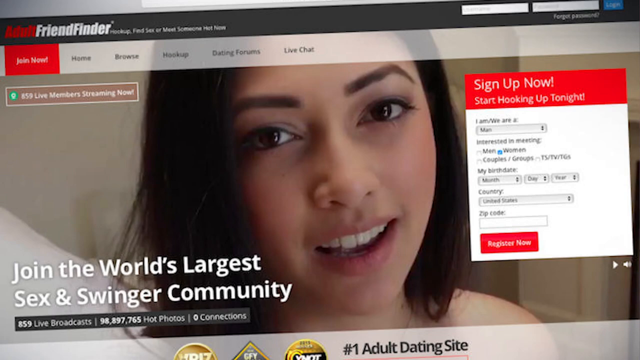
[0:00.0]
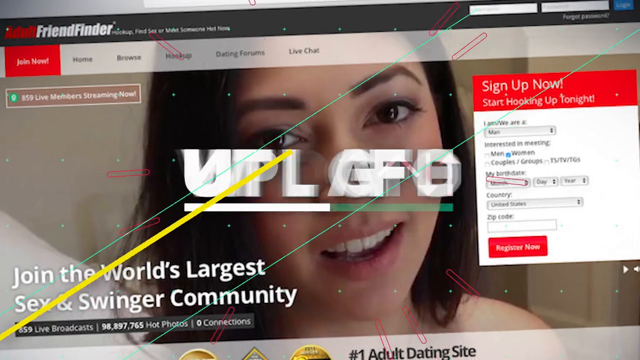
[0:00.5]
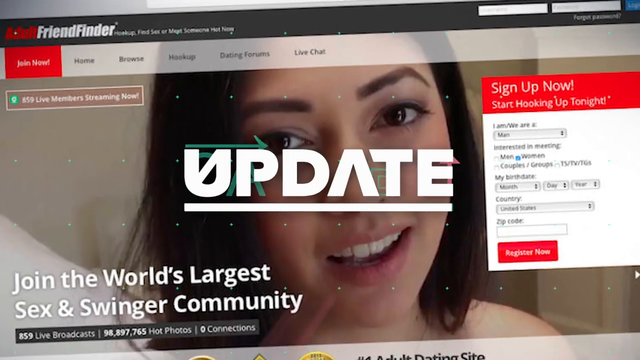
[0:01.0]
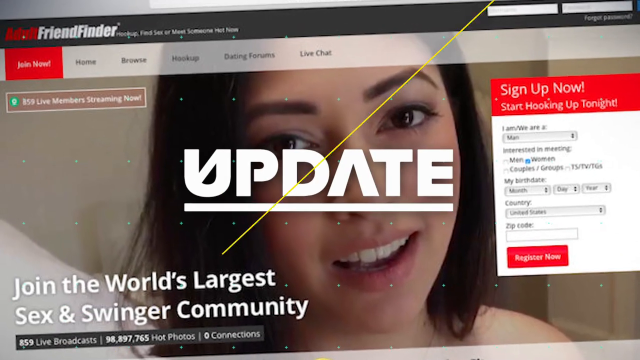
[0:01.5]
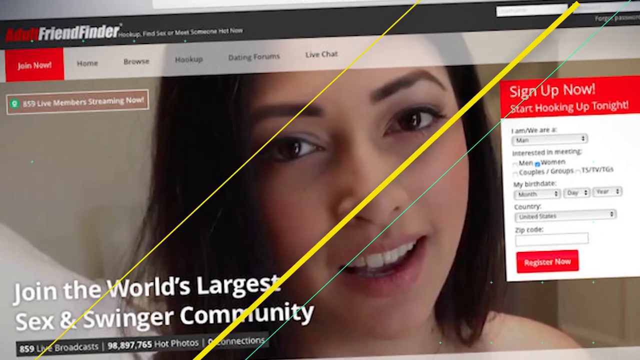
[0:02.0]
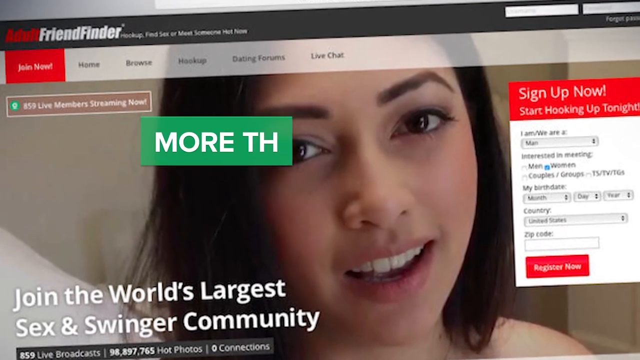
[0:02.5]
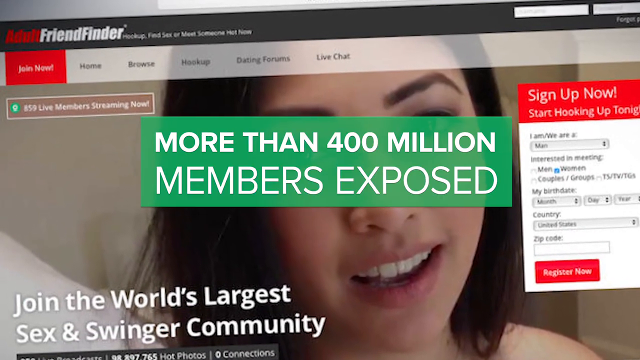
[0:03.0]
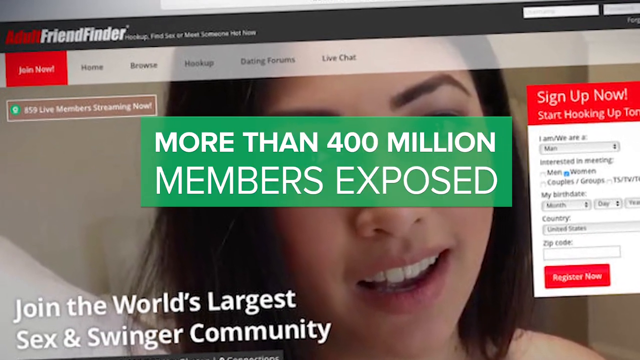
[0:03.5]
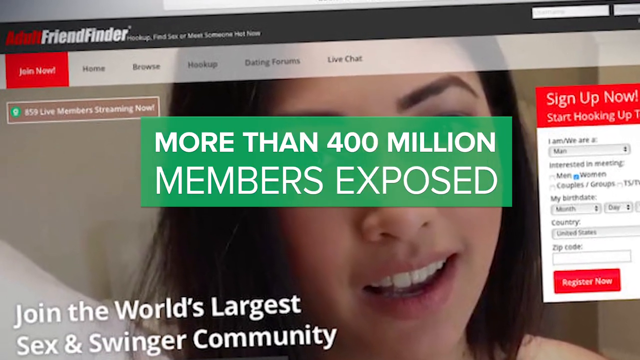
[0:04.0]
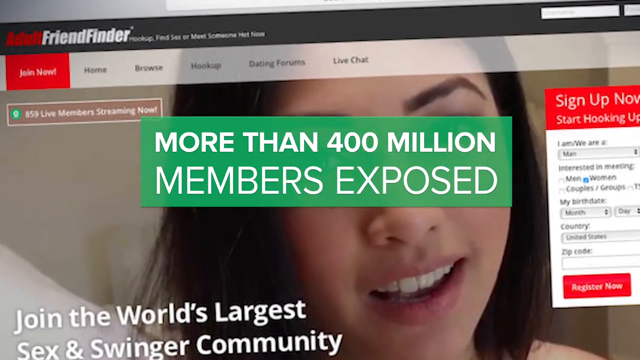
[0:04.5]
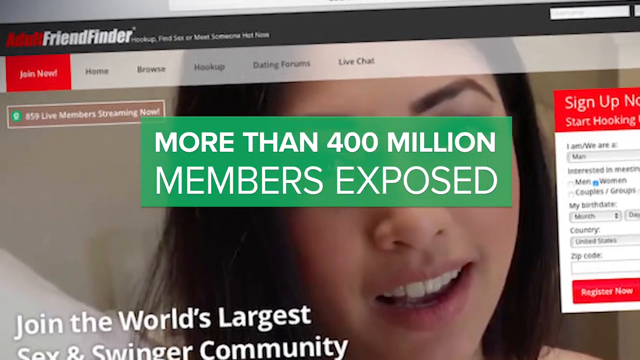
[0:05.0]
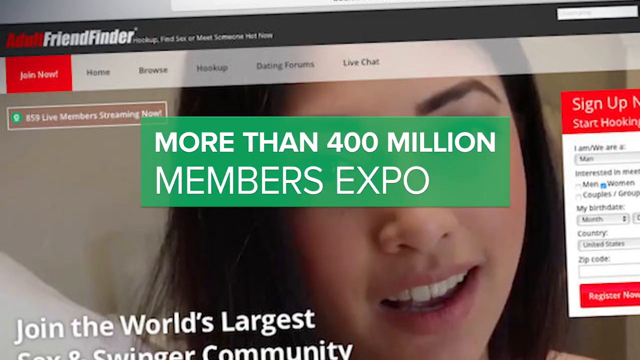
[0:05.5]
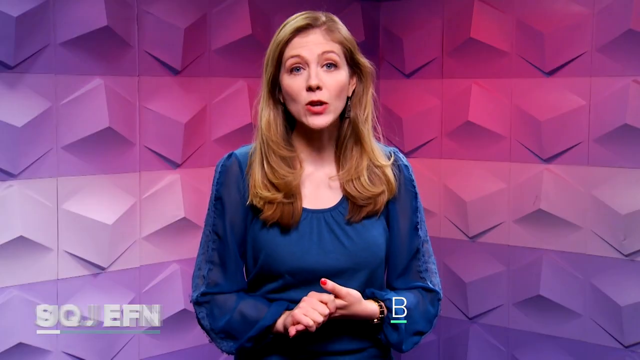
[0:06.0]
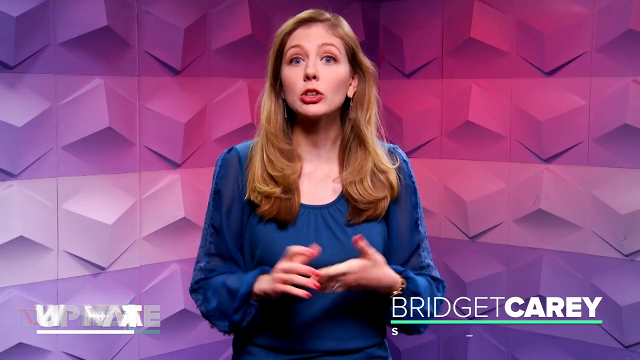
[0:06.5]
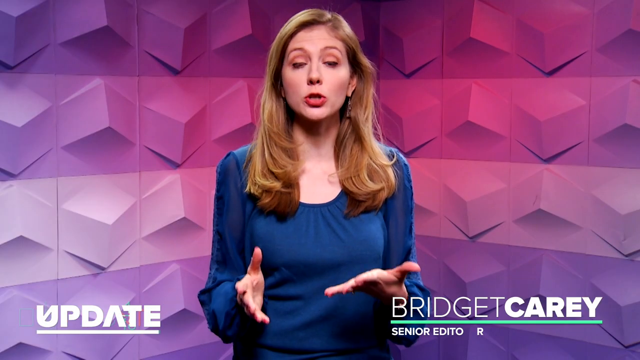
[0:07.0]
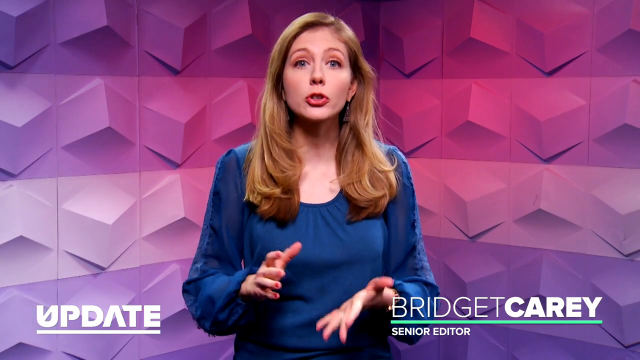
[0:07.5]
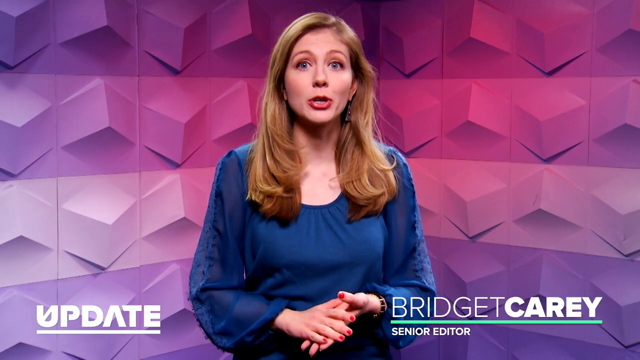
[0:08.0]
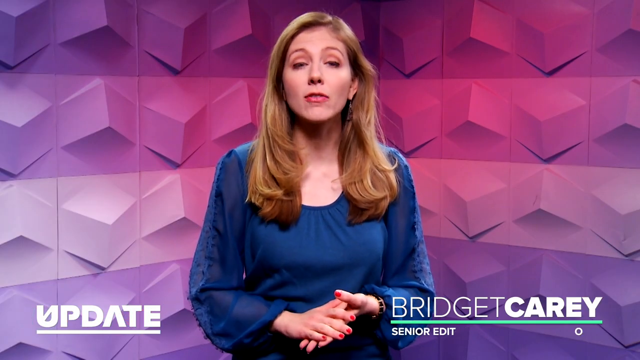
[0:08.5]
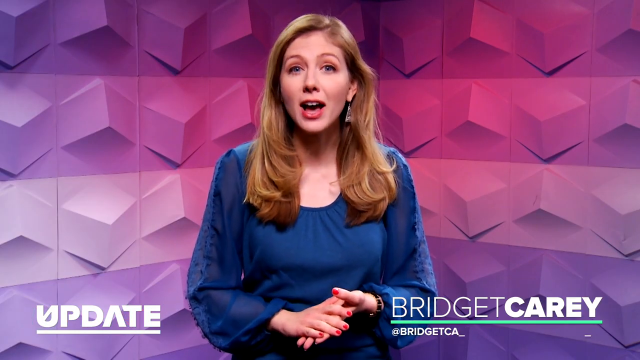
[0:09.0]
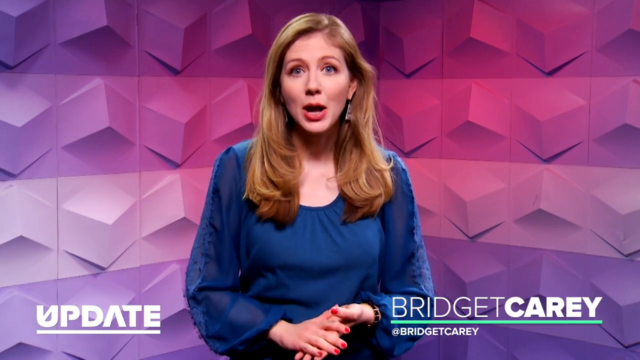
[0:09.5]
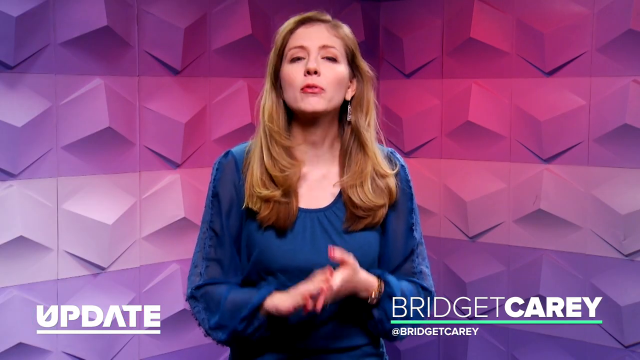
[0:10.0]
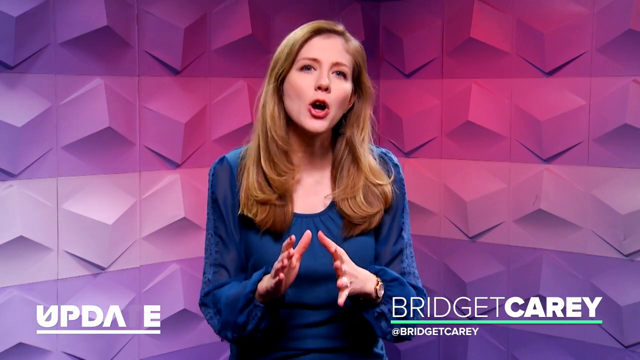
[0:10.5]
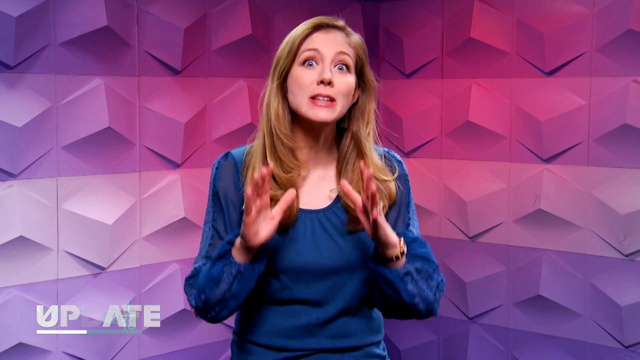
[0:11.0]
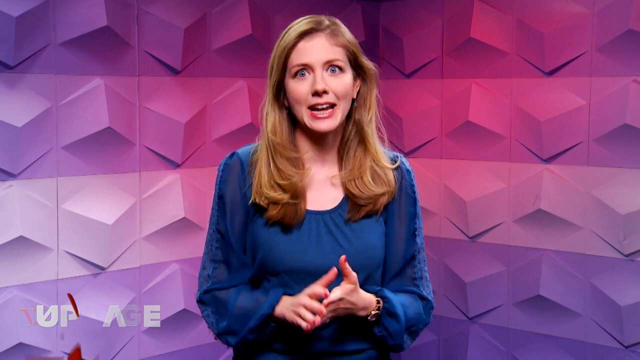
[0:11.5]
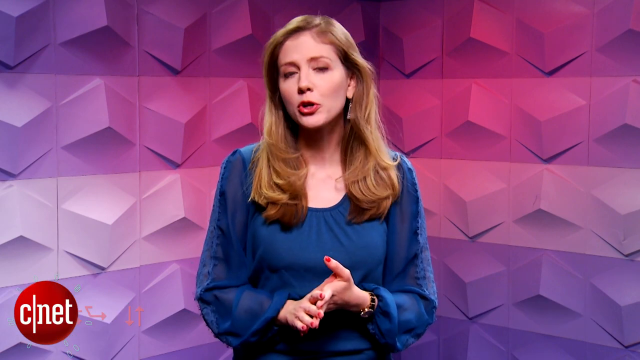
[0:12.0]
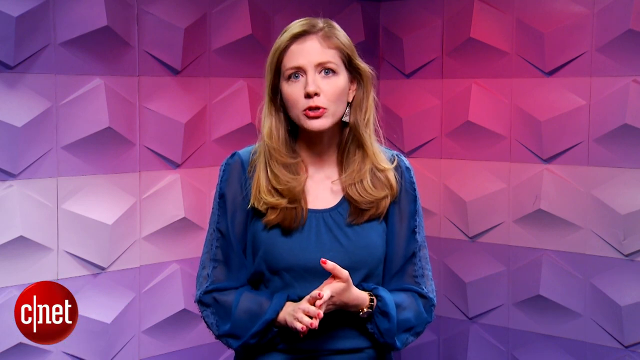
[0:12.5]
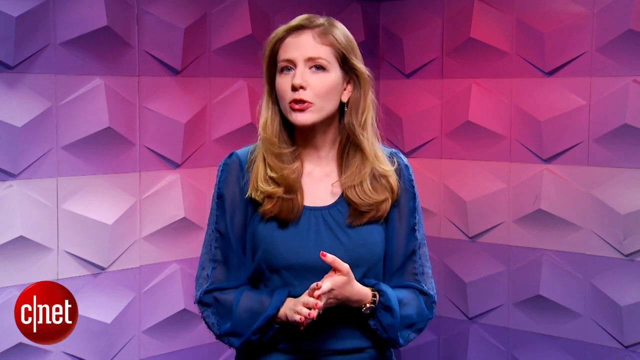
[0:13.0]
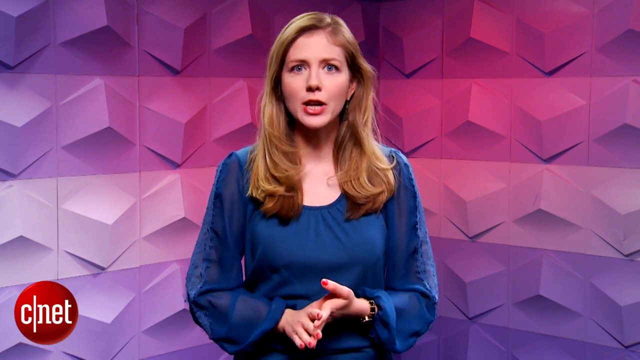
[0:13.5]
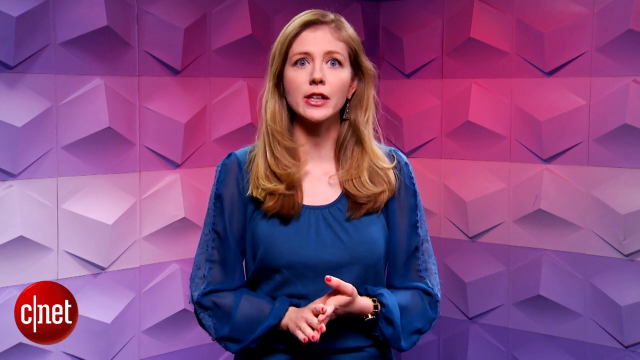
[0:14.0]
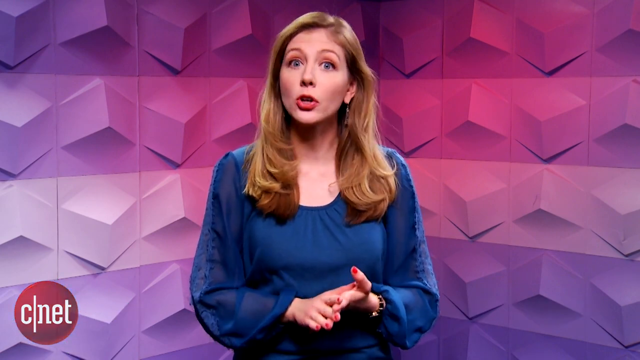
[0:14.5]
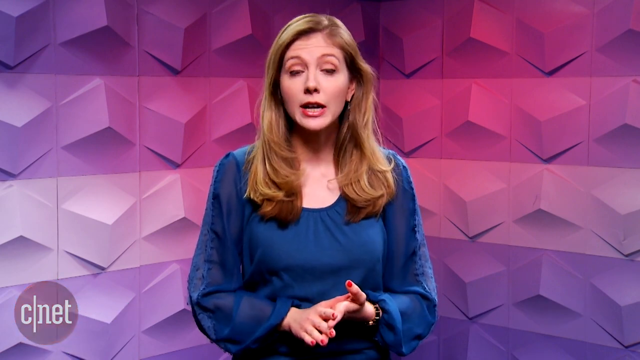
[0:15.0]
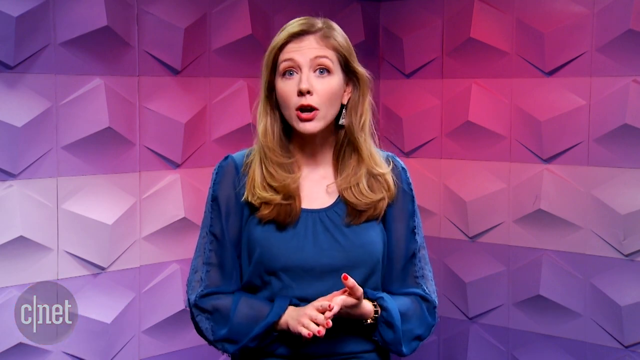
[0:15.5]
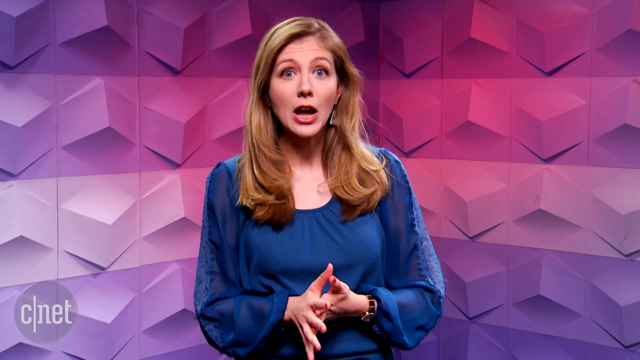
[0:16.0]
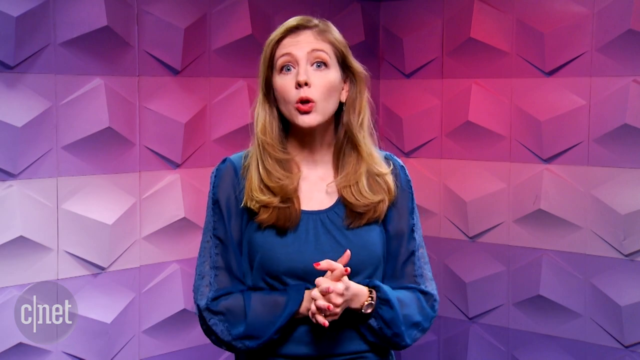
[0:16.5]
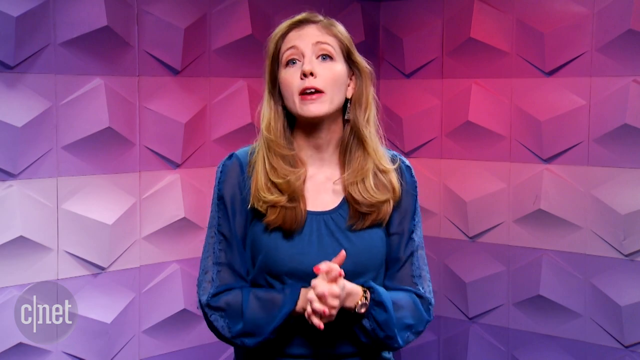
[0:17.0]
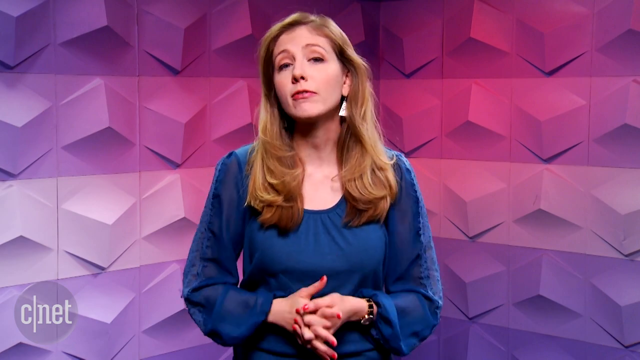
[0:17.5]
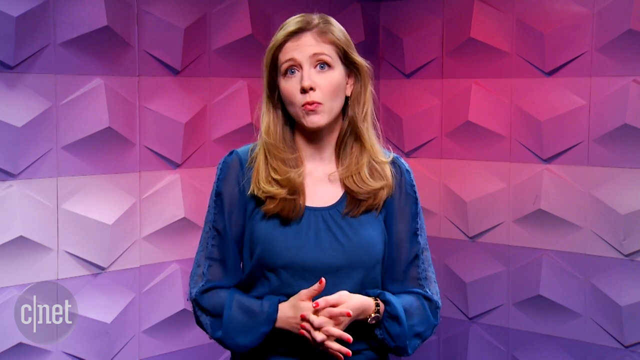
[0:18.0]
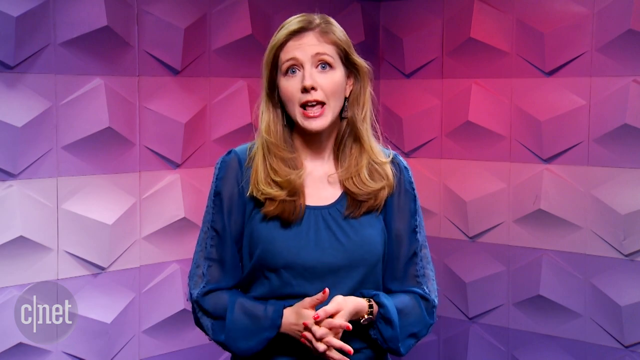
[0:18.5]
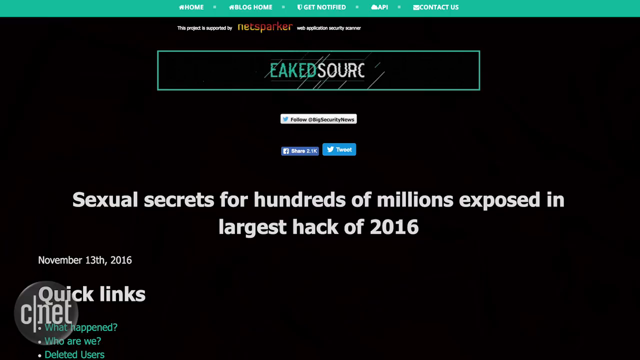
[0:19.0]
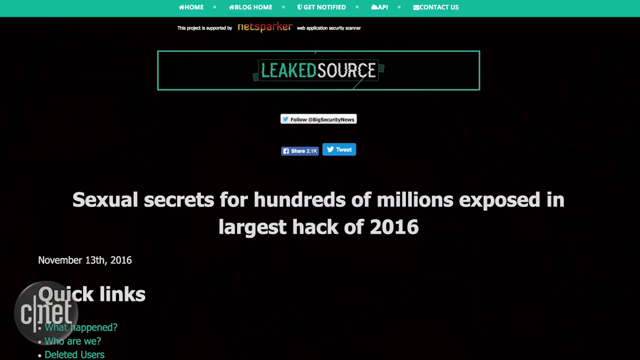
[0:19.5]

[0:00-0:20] The screen shows the text "Join the world's largest sex and swinger community with our friend finder," which looks like a membership campaign inviting someone to sign up and join the community. It mentions more than 400 million members who have been exposed. On the sign-up form it says "sign up now, start waking up tonight." The form asks whether the user is a man or a woman, then what they are interested in, with options for men, women, couples or groups. It also asks for a birth date, country and zip code, and there is a "register now" button.